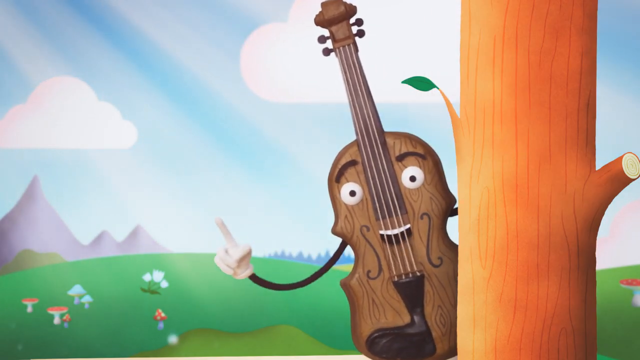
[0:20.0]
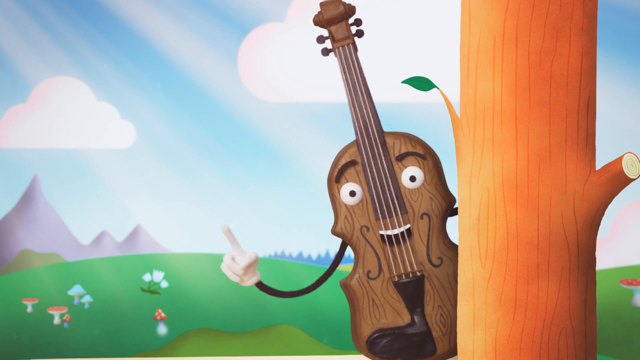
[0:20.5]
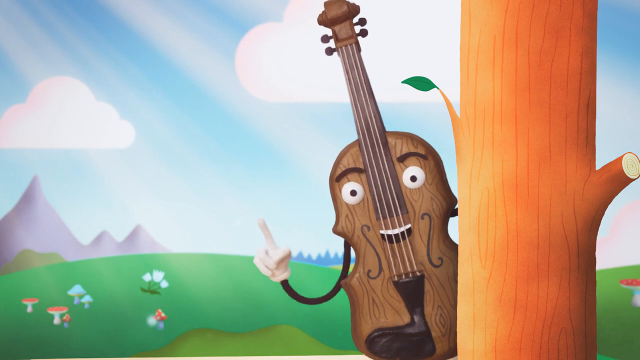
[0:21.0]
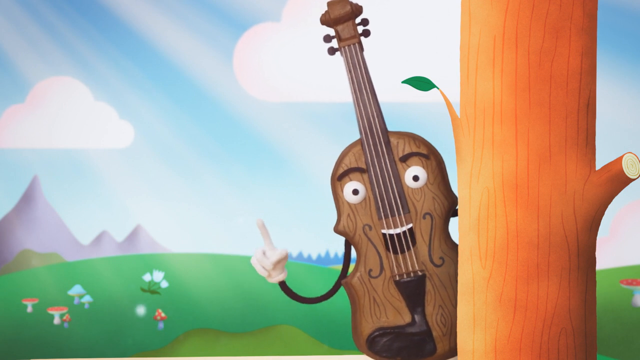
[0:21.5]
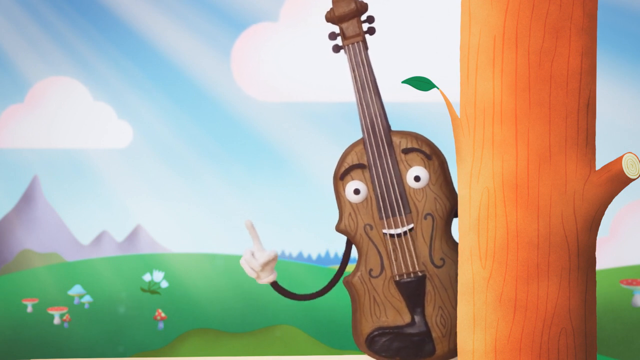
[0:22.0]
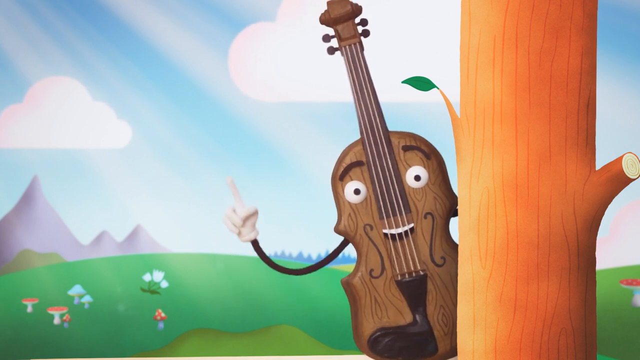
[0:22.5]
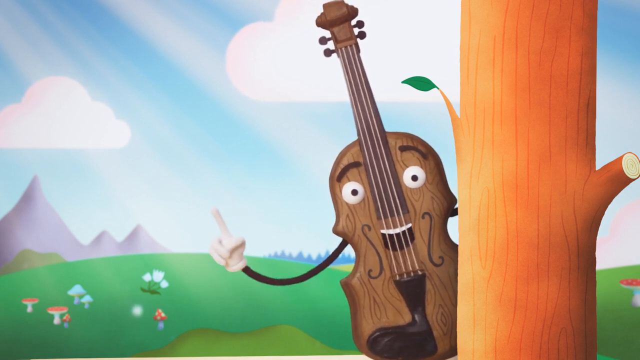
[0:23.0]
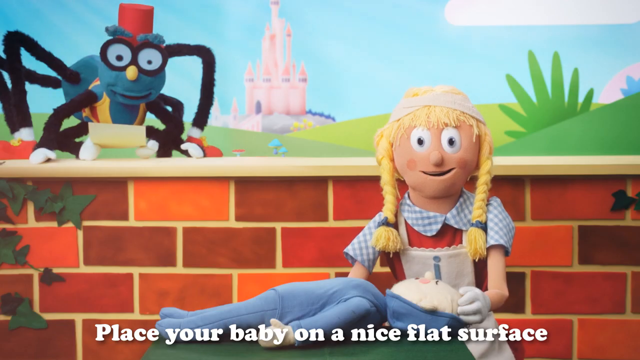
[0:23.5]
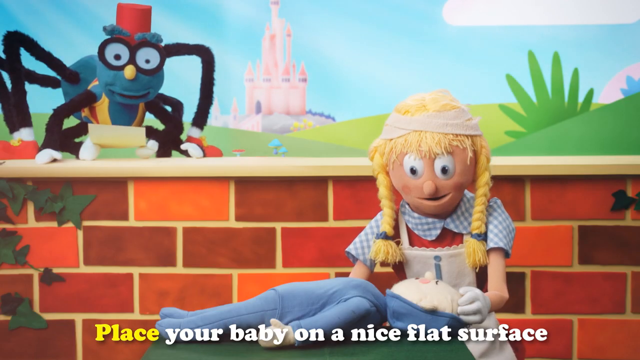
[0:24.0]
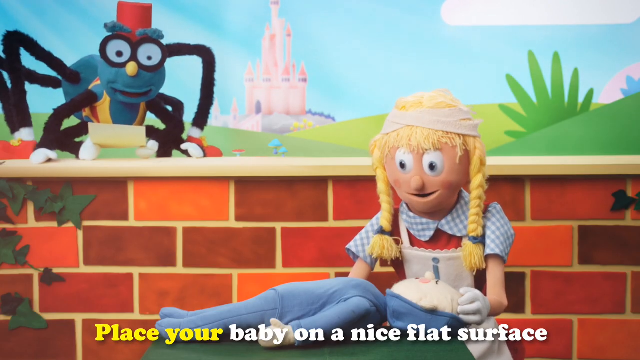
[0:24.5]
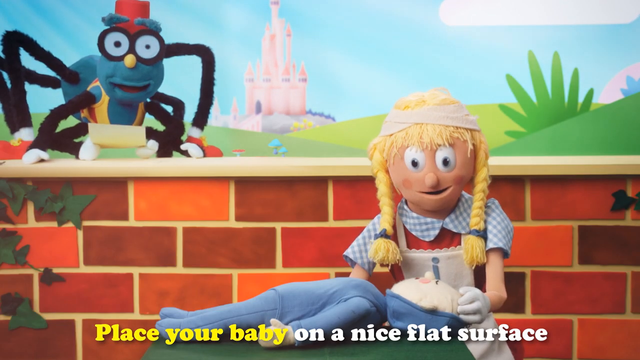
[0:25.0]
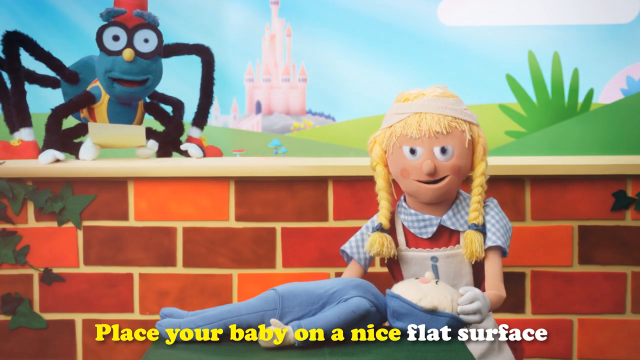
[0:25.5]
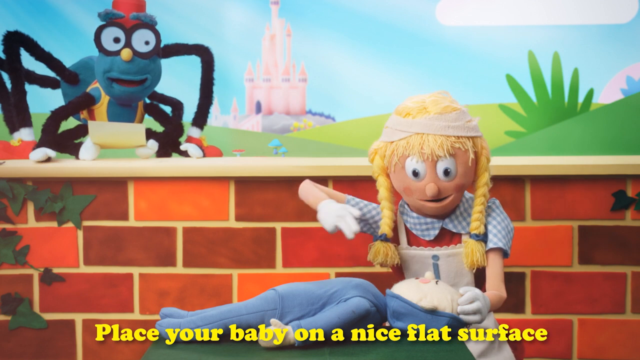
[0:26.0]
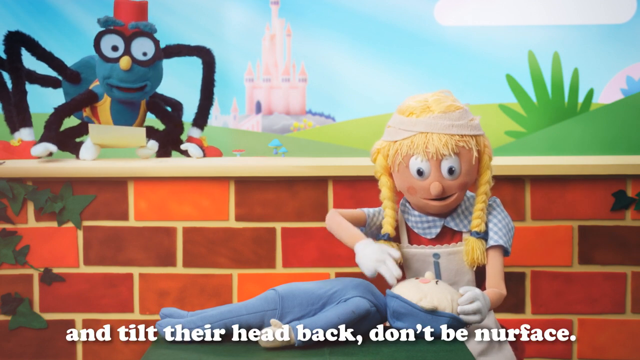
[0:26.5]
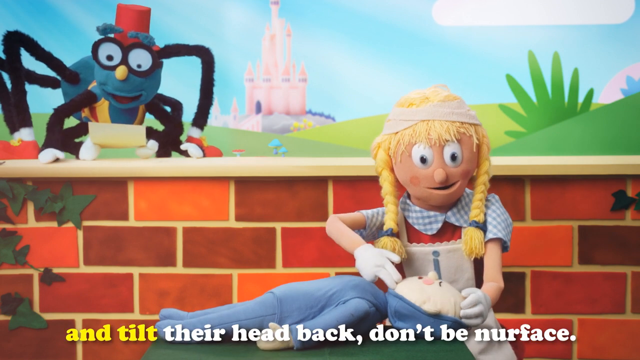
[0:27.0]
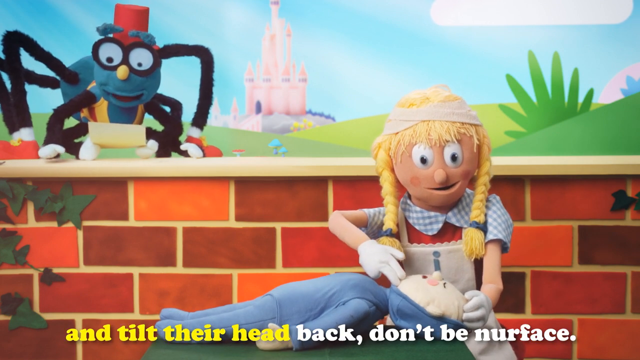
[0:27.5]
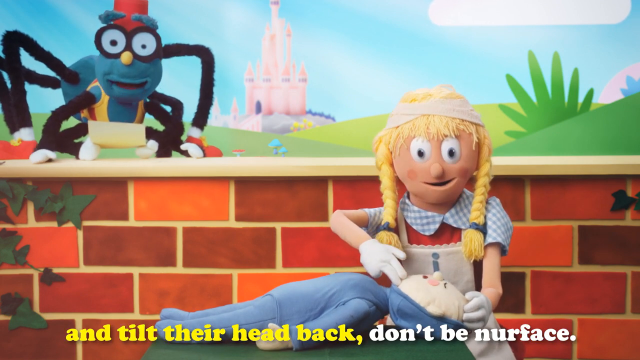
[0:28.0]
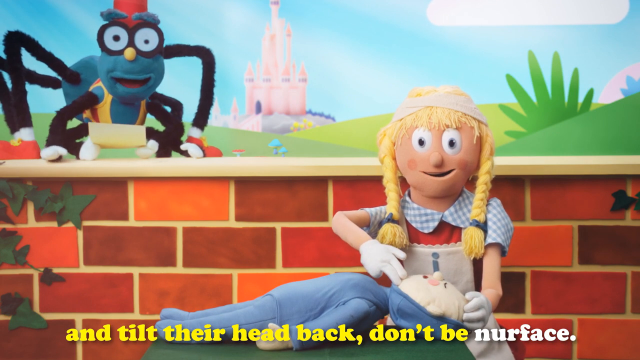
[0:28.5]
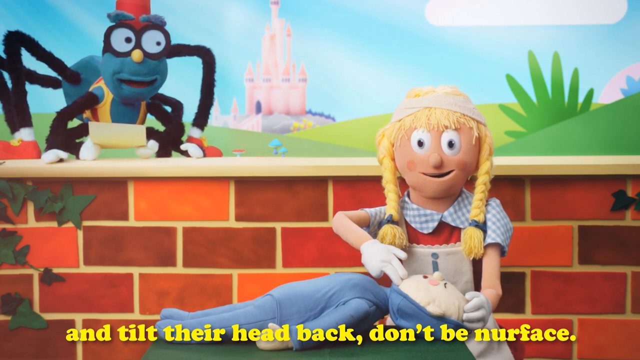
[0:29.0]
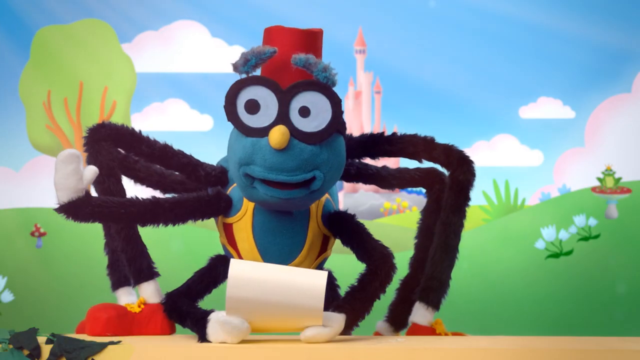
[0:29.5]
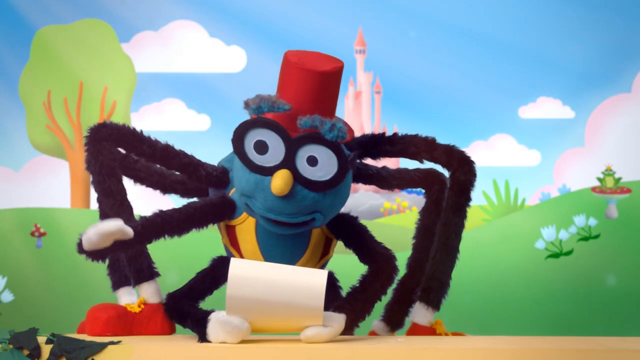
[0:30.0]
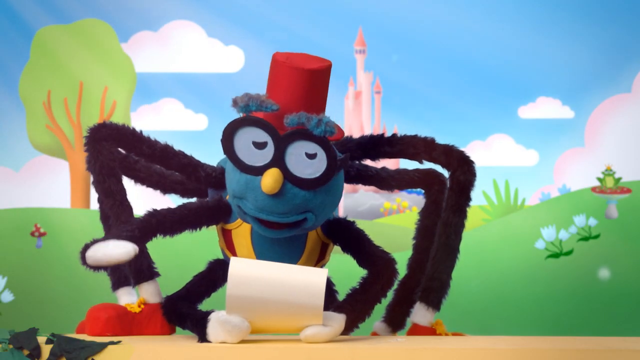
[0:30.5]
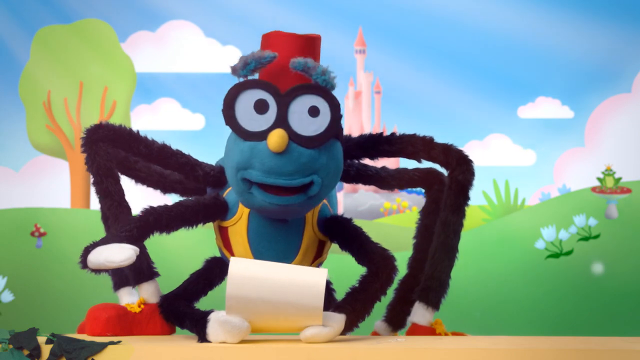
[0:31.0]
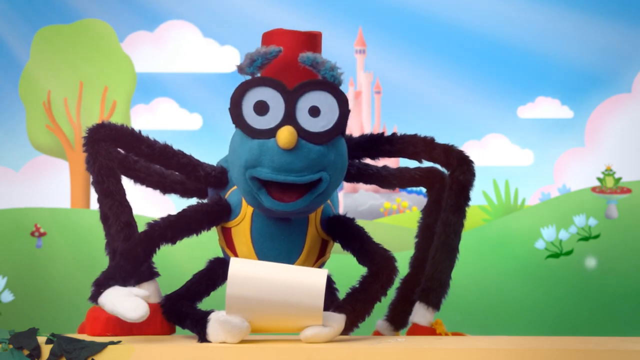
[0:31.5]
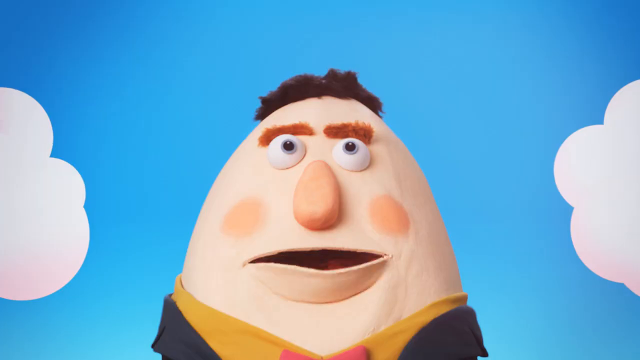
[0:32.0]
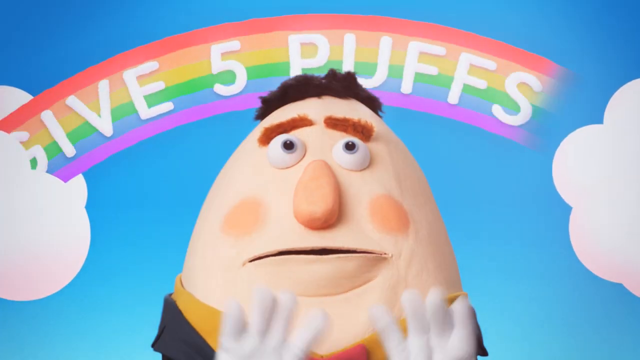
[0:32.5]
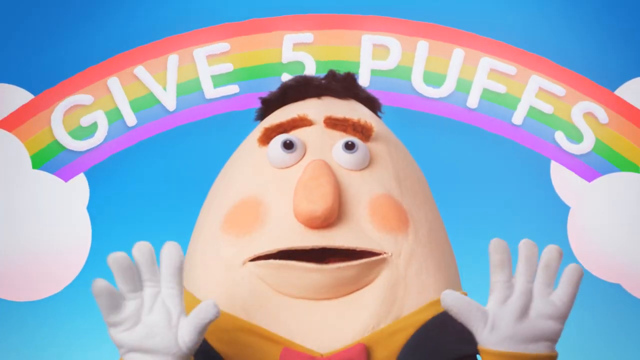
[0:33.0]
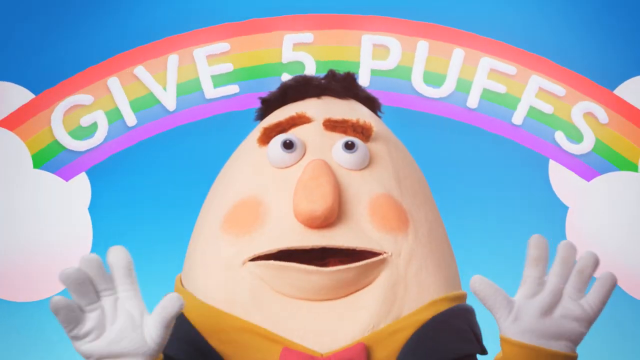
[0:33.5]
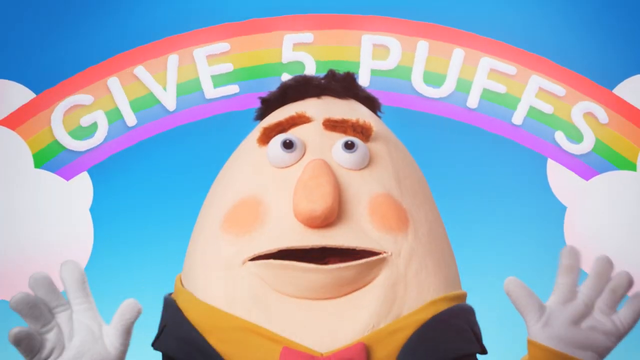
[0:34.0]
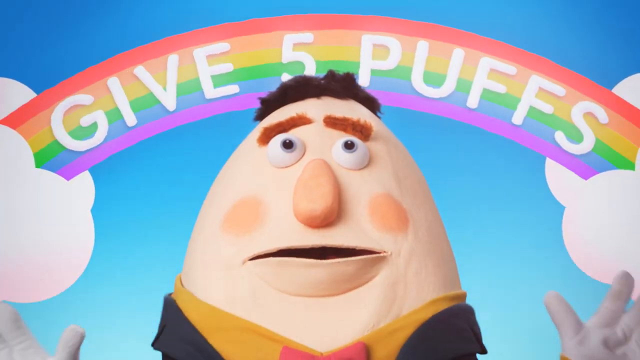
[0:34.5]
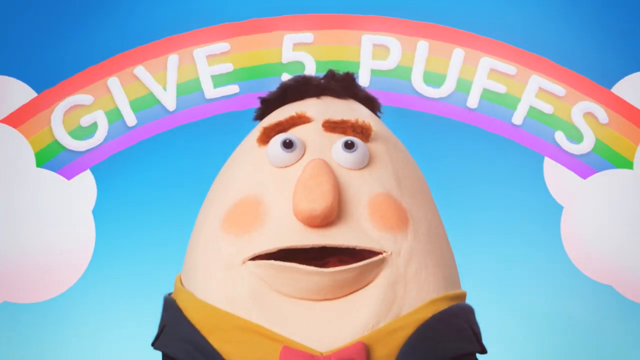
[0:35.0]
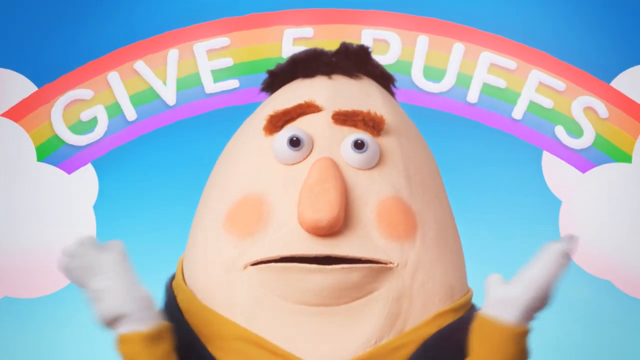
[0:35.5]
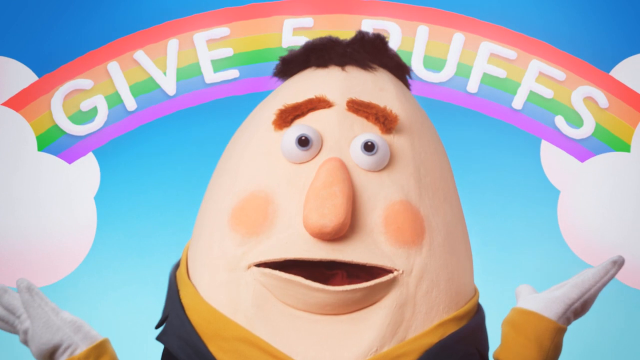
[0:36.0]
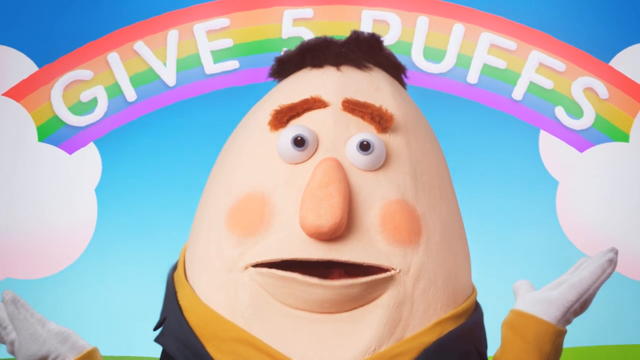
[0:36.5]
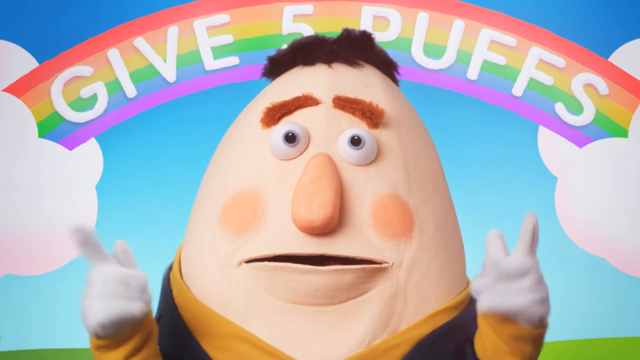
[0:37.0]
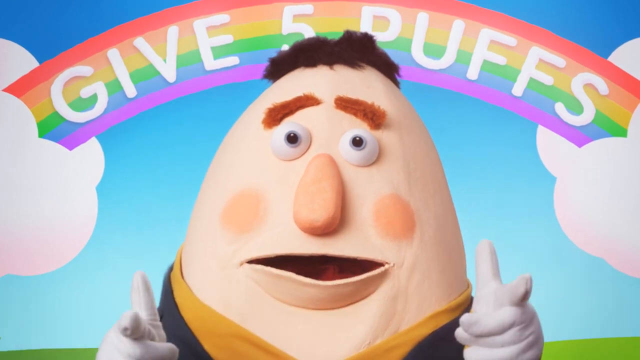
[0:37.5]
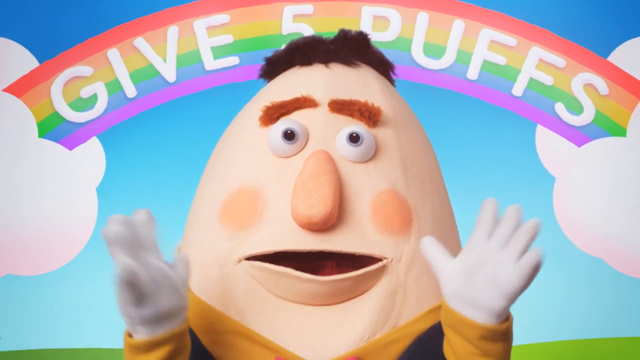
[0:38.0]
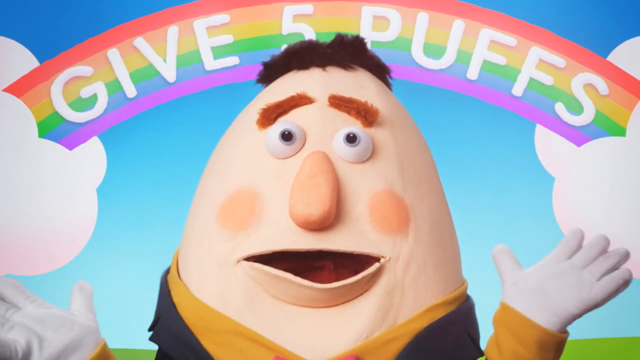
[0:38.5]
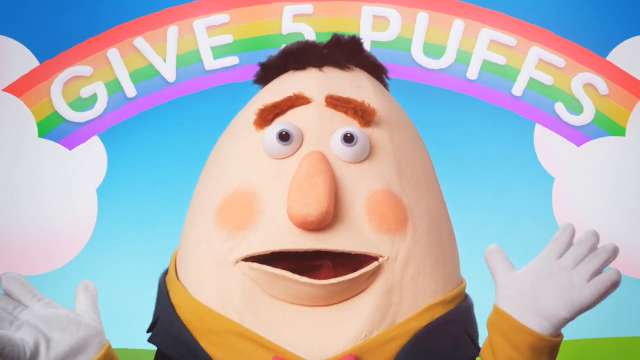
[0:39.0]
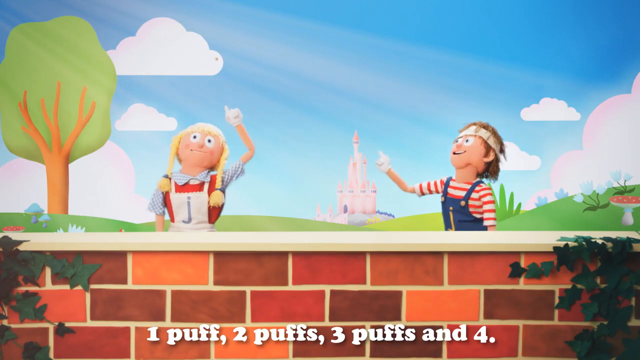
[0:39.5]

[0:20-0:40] The violin talks and points a finger up. The words "place your baby on nice flat surface and tilt their head back" appear, and then a spider is shown. The words "give five puffs" appear in white lettering in a rainbow stretching from cloud to cloud; they come from the Humpty Dumpty type character. A baby in a blue long-sleeved top and blue pants lies on the ground, possibly a dummy. A blonde girl with braids, resembling Gretel, wears a dress and white gloves and shows how to tilt the chin back. The spider reads something from a paper. There are mountains in the back and a pink capsule in the very background. It apparently is an educational children's video.